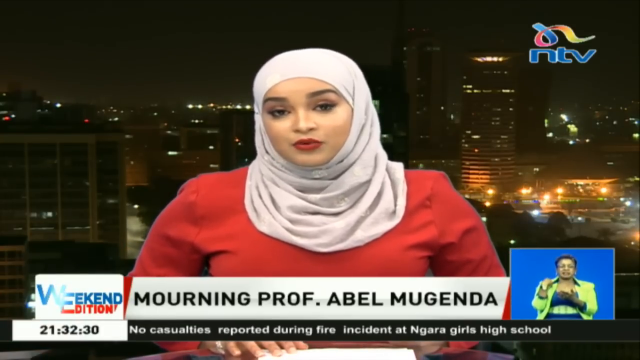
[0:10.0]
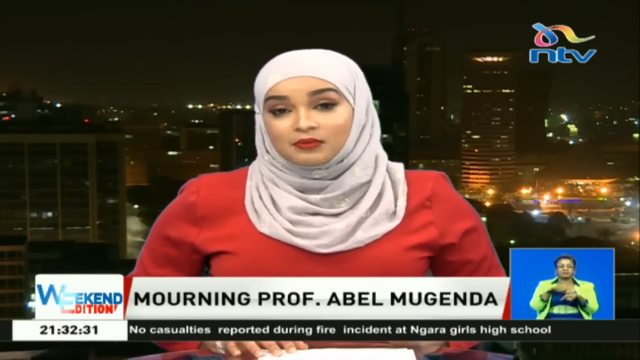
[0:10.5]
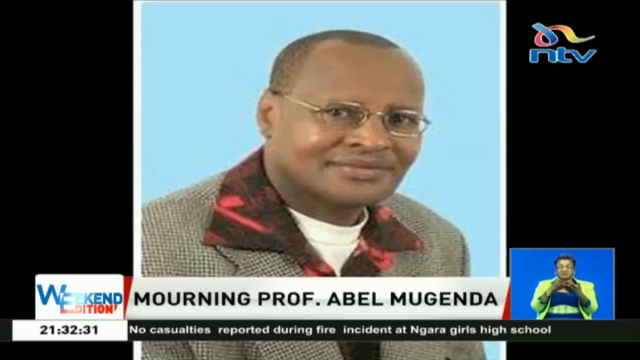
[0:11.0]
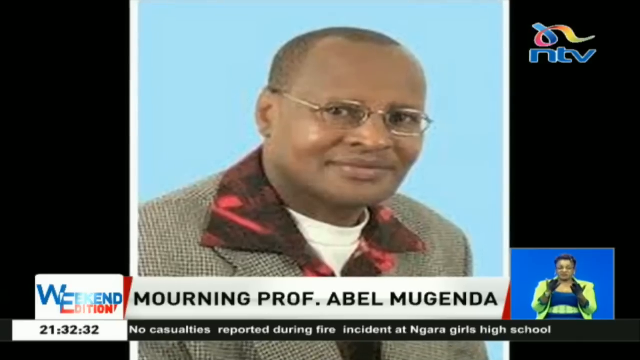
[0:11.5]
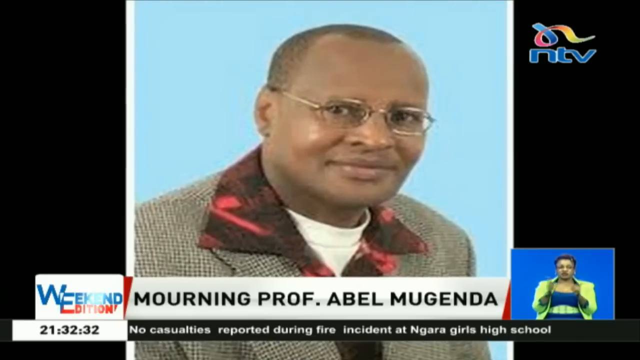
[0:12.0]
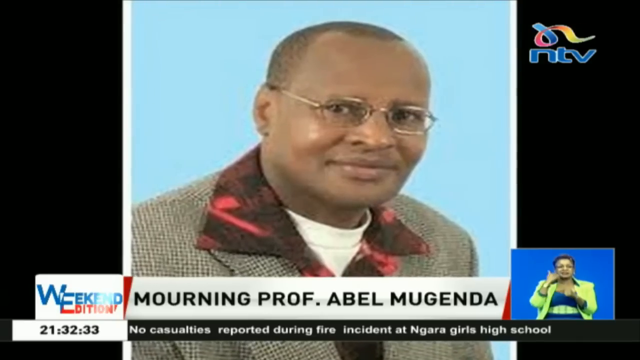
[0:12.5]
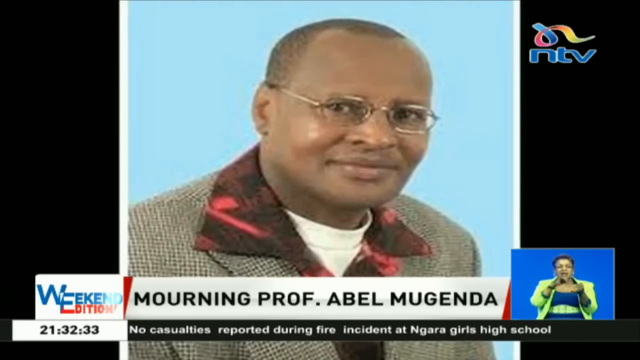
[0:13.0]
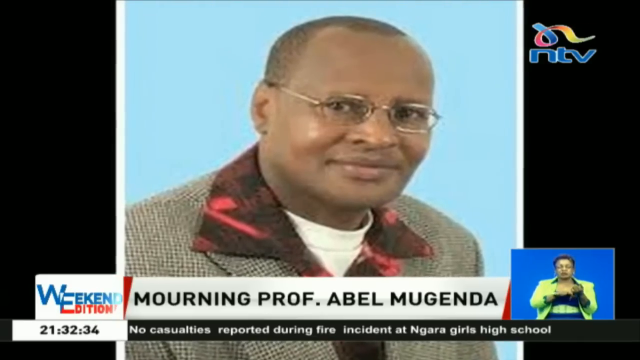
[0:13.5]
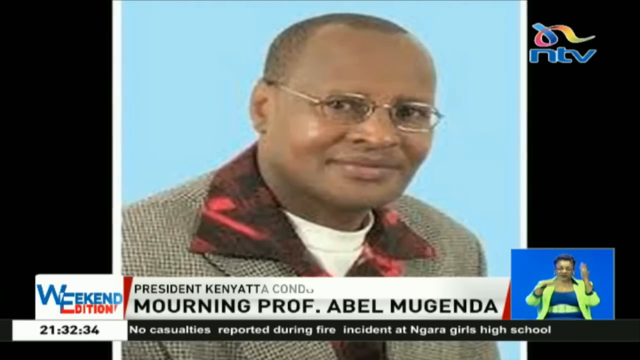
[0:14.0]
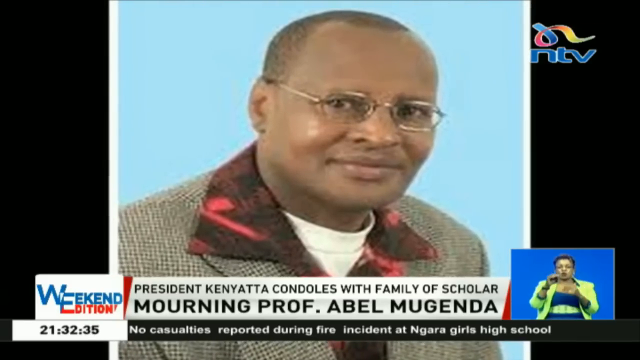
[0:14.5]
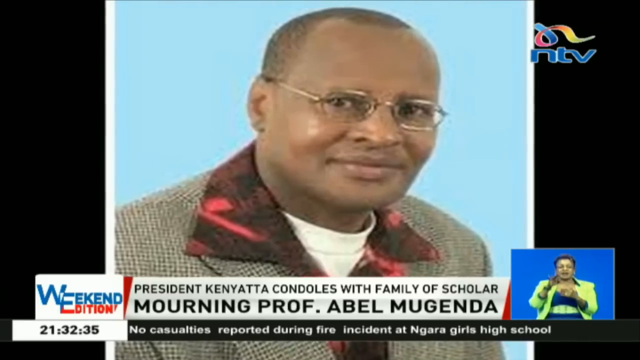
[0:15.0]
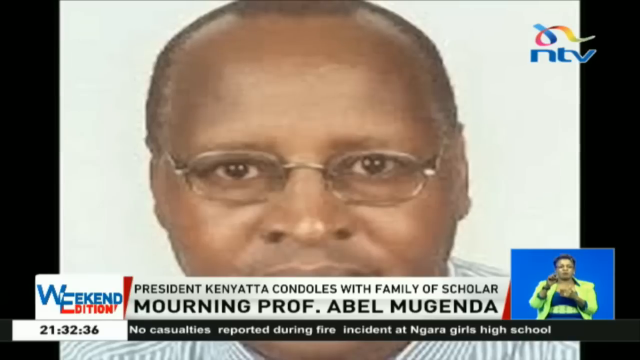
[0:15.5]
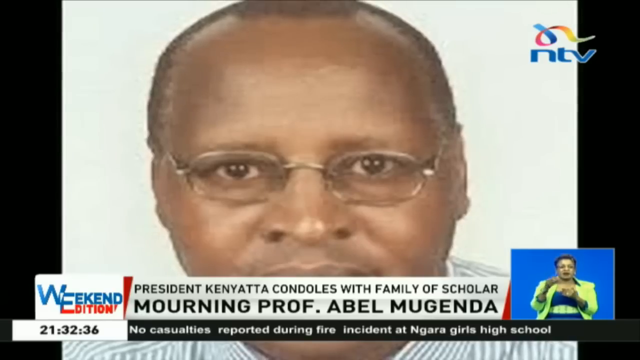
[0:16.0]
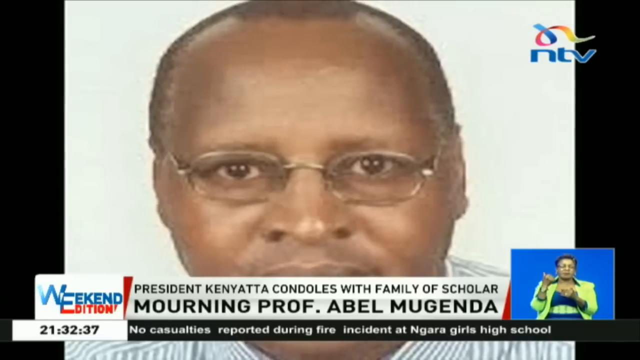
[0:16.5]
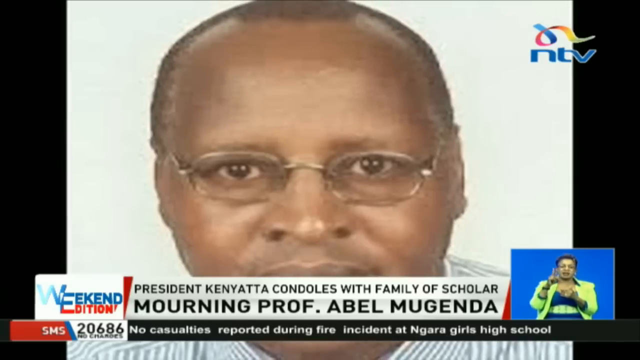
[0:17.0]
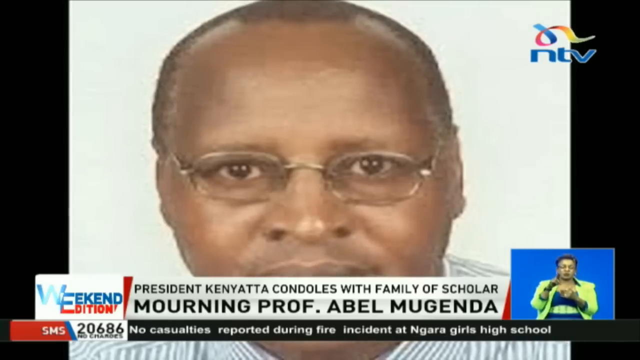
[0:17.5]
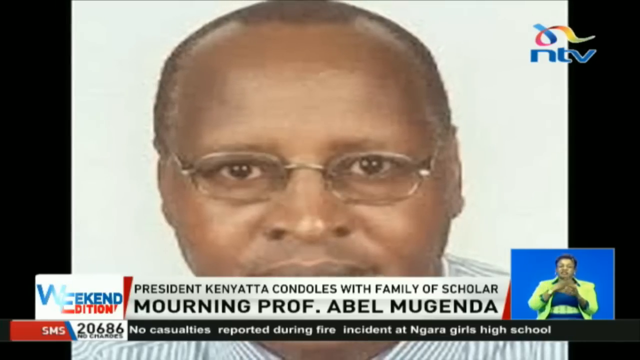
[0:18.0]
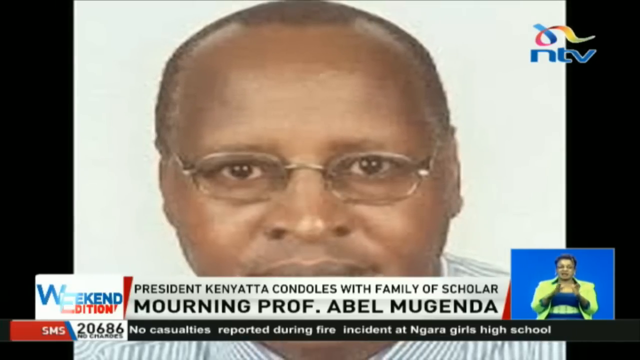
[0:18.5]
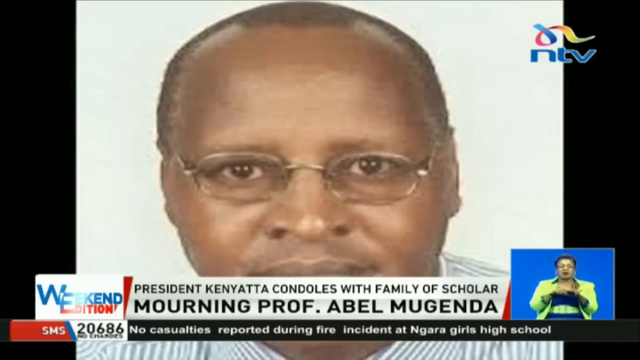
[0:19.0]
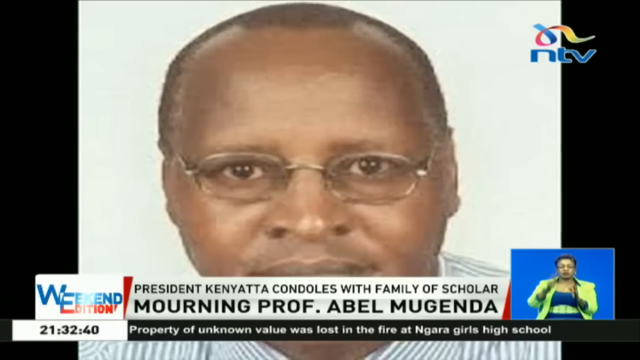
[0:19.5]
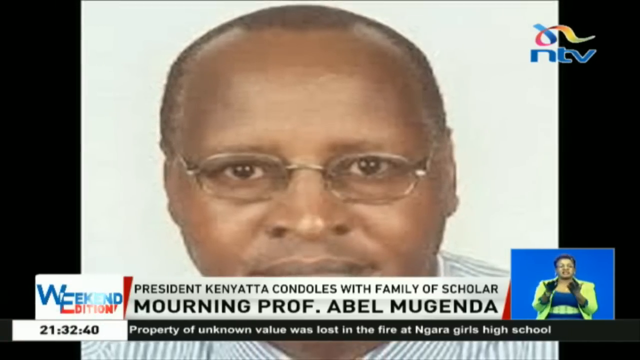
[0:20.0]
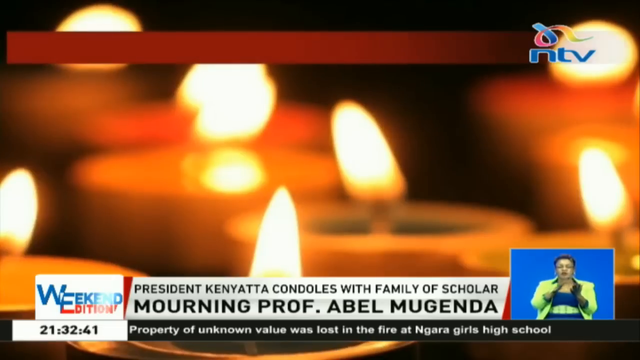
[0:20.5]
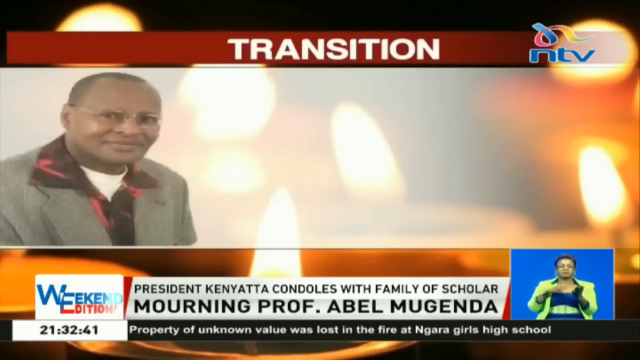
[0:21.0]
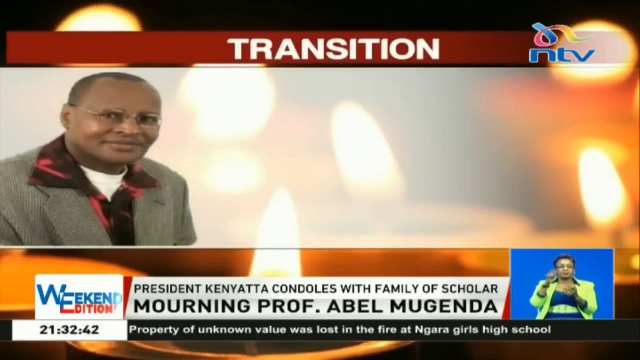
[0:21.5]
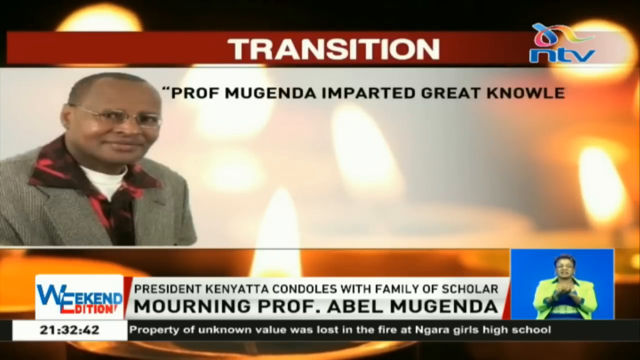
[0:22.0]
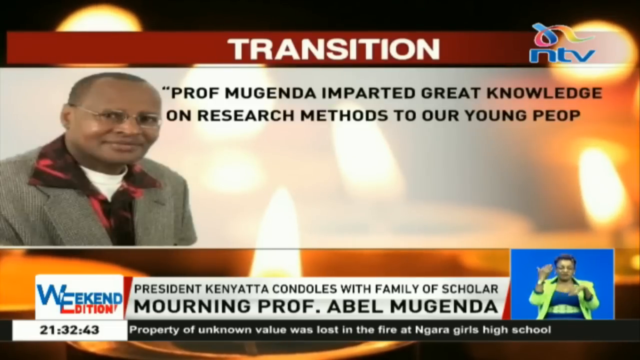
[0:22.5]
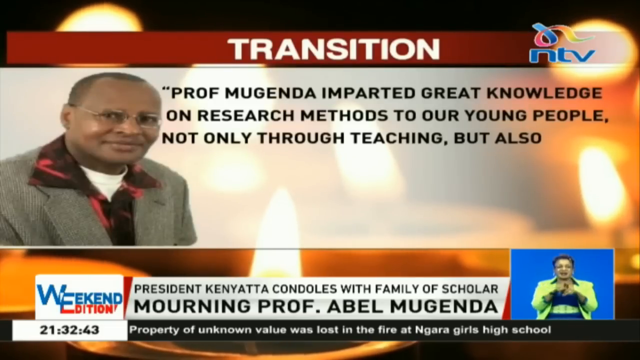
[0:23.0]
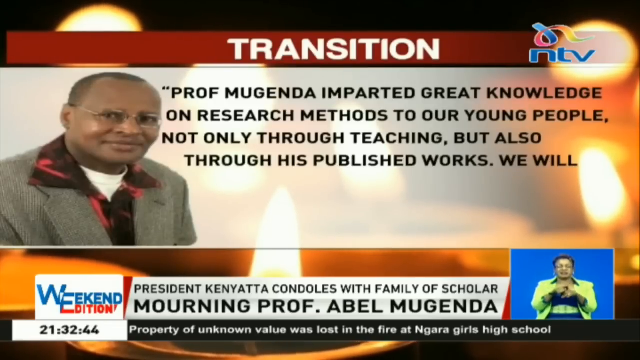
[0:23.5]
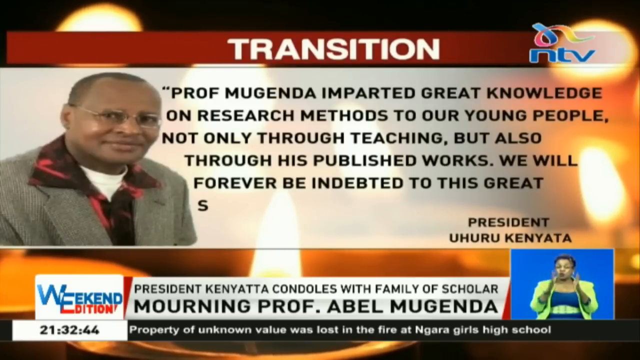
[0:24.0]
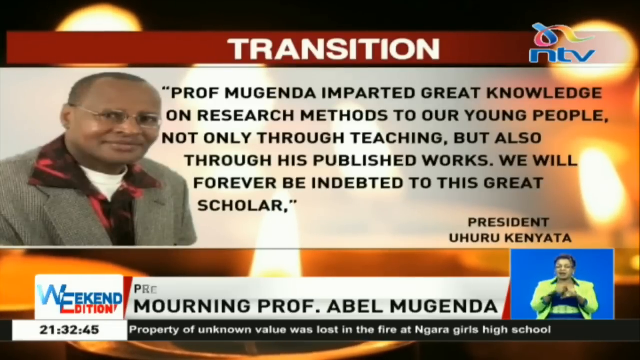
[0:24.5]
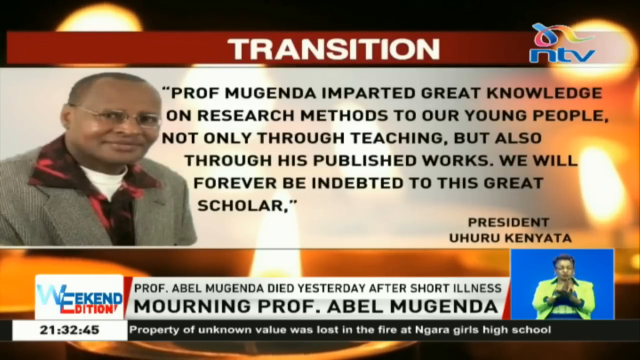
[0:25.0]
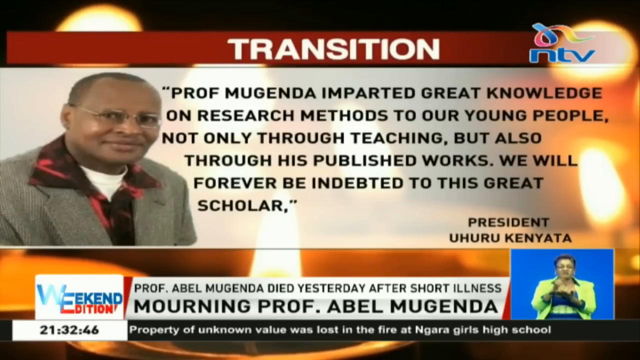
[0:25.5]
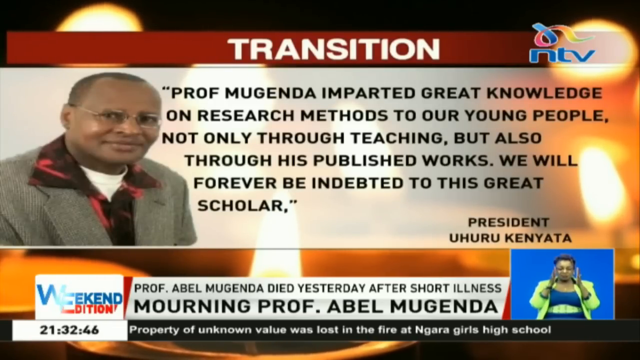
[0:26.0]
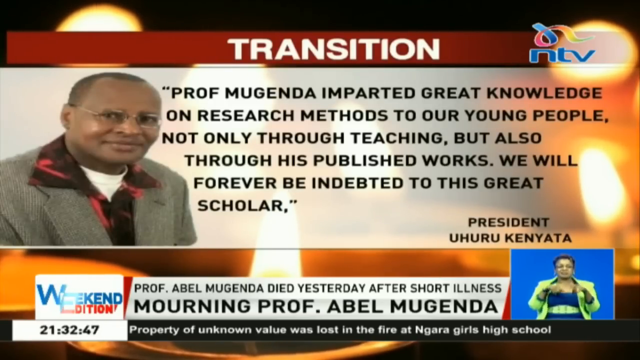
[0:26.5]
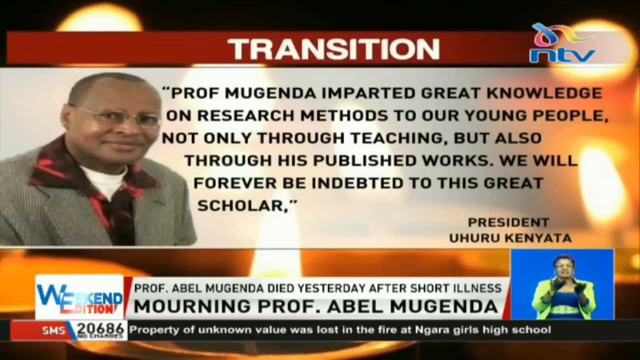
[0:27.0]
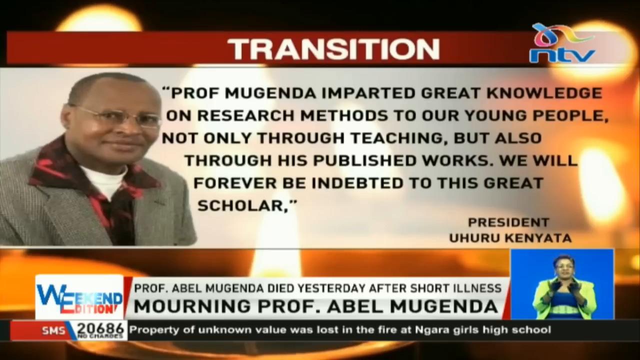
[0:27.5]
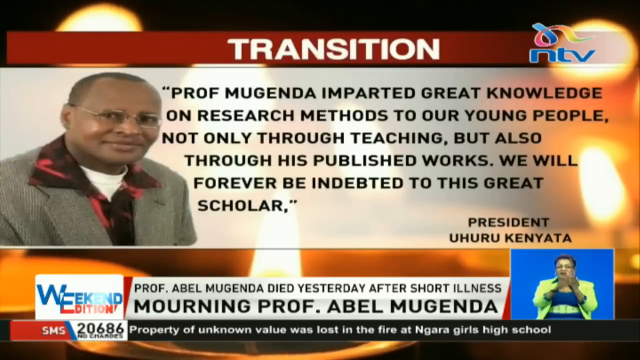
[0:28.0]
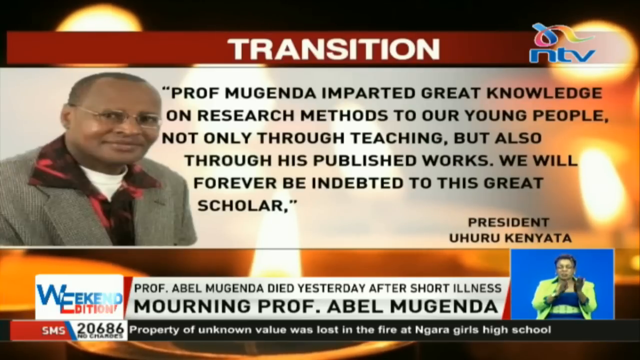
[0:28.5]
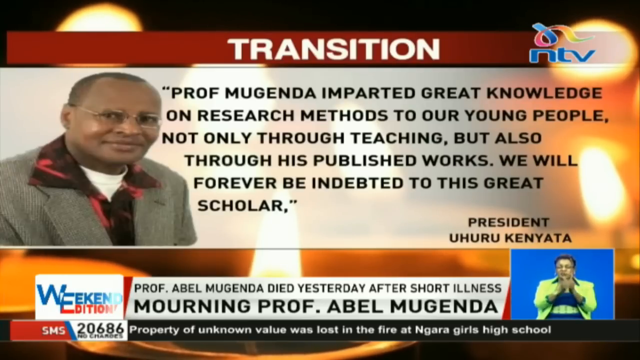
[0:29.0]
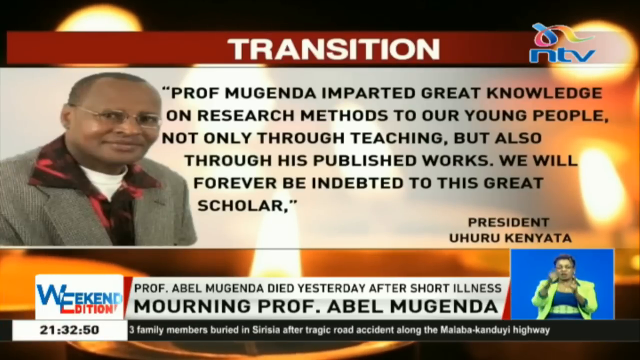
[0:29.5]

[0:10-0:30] The professor's face is shown on screen. He is a Black man wearing Benjamin Franklin-type glasses, a little wider, a white undershirt, a glossy red velvet shirt and a brownish tweed jacket. Text reads "research methods to our young people, not only through teaching, but also through his published works. We will forever be indebted to this great scholar," attributed to President Uhuru Kenyatta. His image is shown in the background of the news report, then fills the whole screen, and then the shot returns to the newscaster. She is a dark-skinned woman with her head covered and only her face exposed, wearing red lipstick, with her hands on her hips.